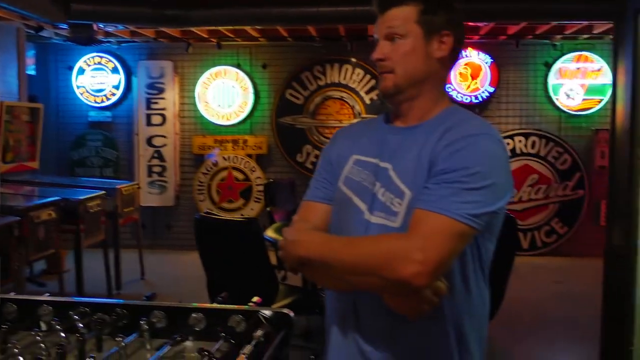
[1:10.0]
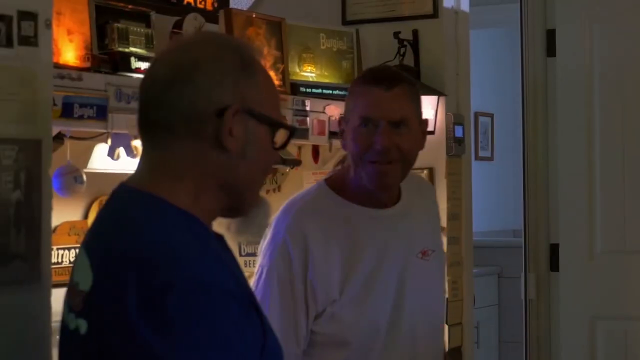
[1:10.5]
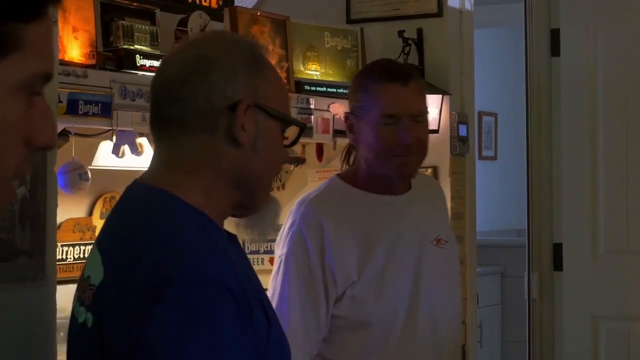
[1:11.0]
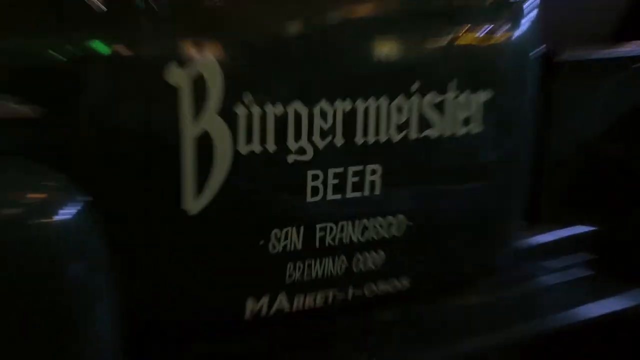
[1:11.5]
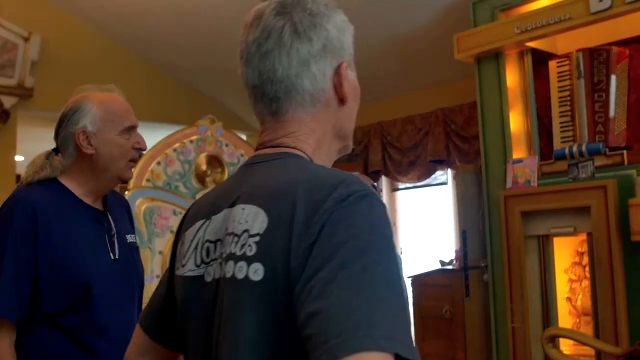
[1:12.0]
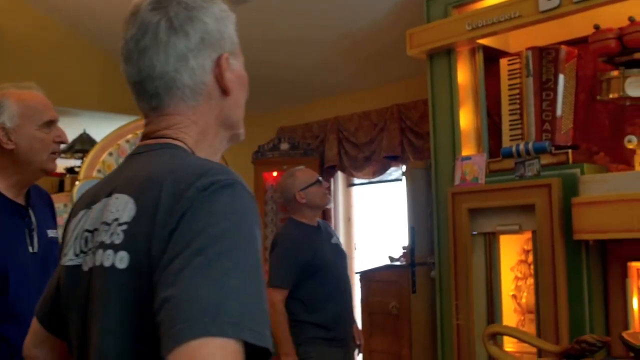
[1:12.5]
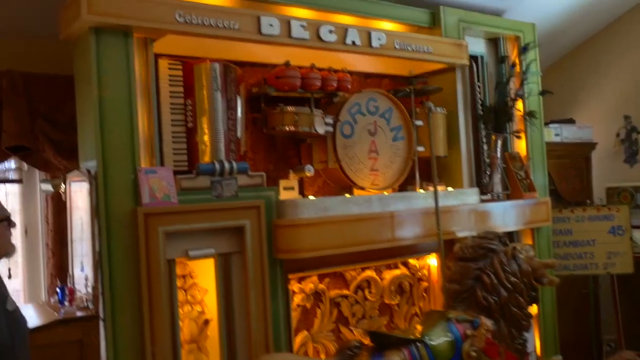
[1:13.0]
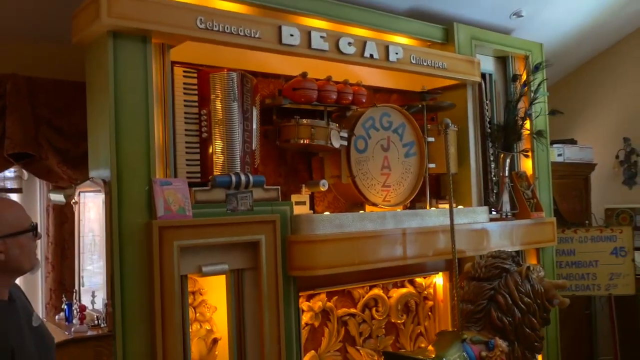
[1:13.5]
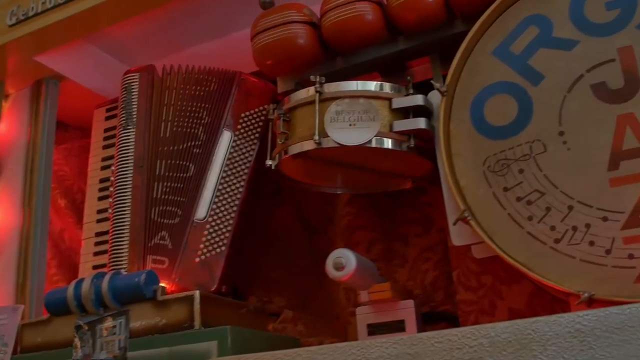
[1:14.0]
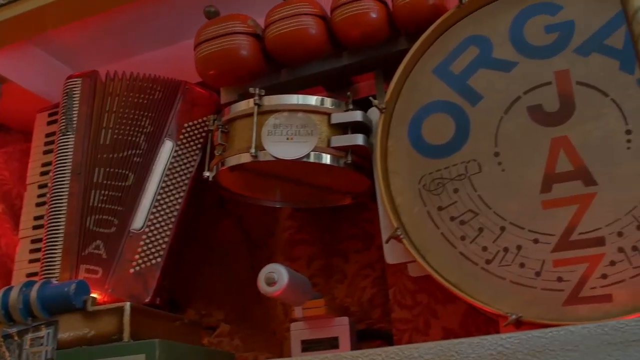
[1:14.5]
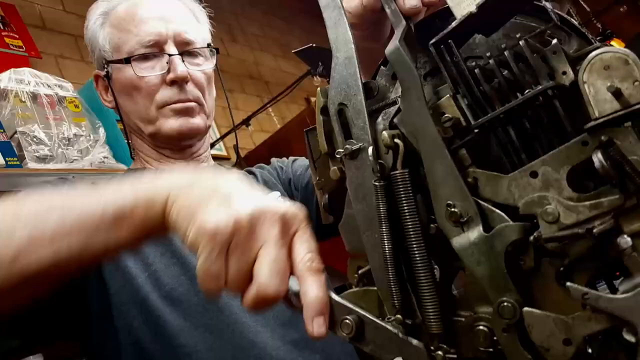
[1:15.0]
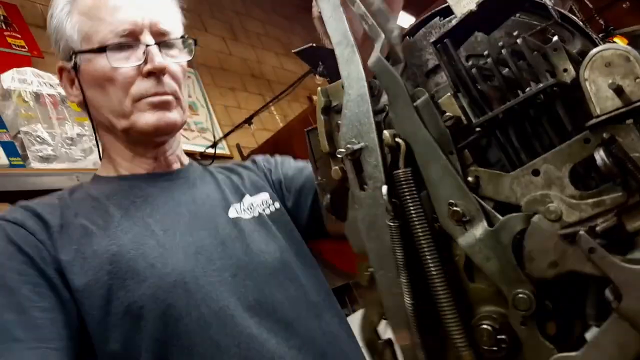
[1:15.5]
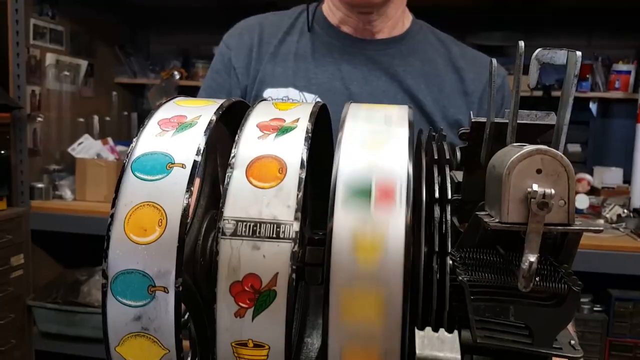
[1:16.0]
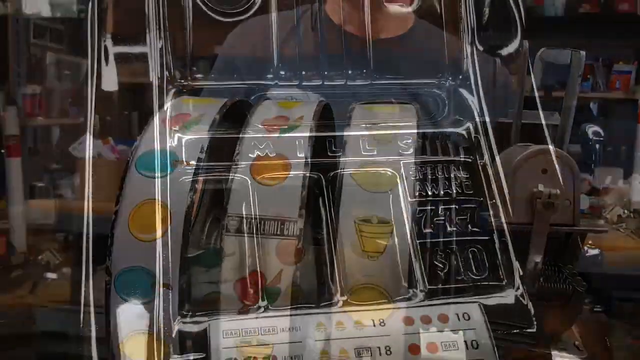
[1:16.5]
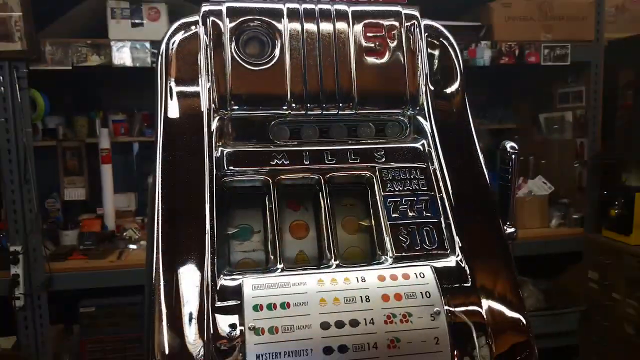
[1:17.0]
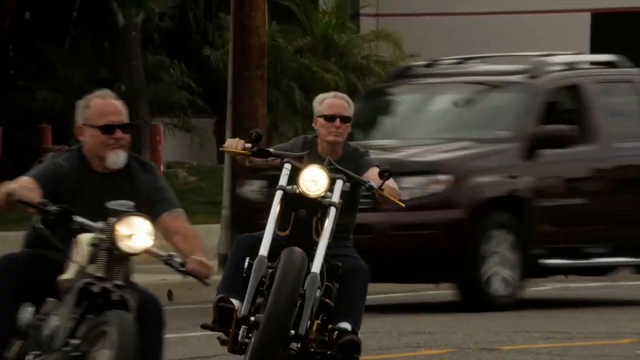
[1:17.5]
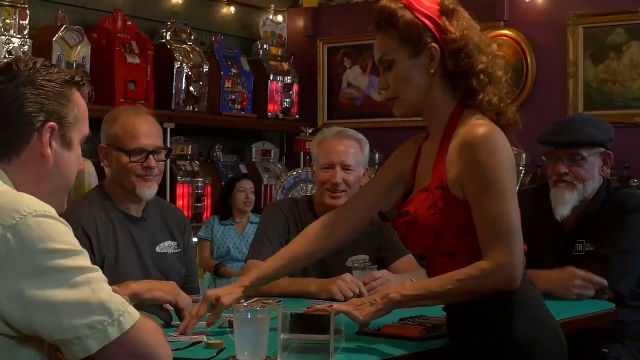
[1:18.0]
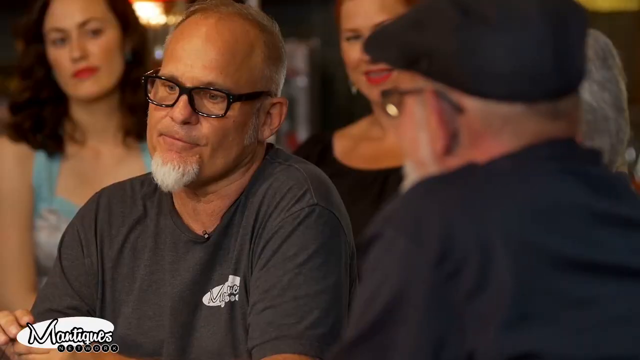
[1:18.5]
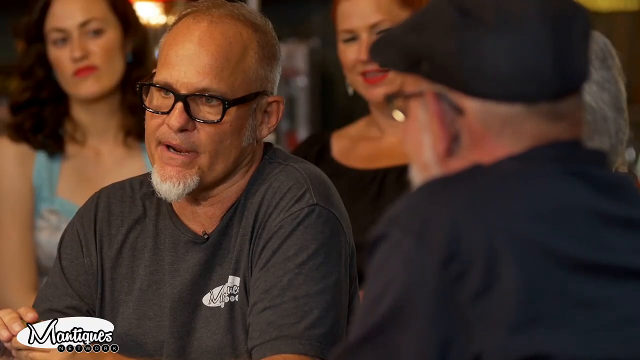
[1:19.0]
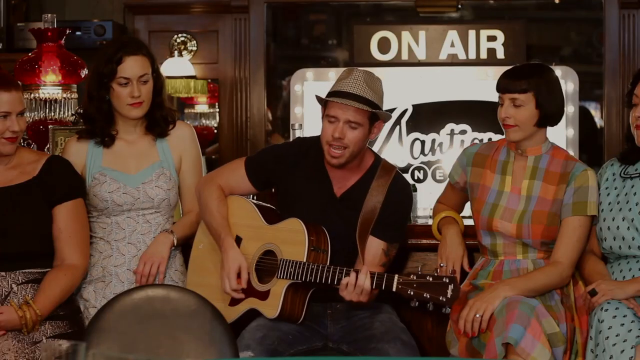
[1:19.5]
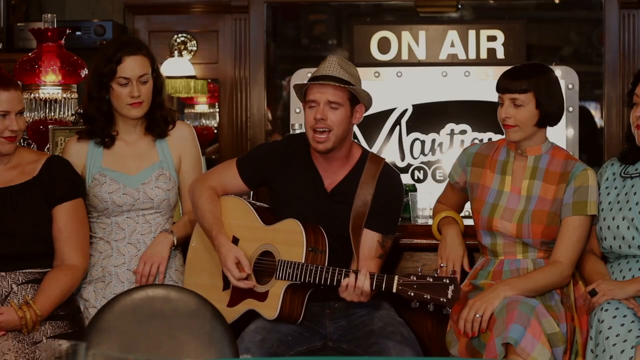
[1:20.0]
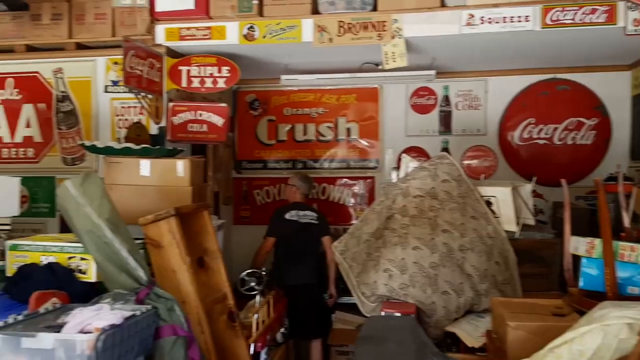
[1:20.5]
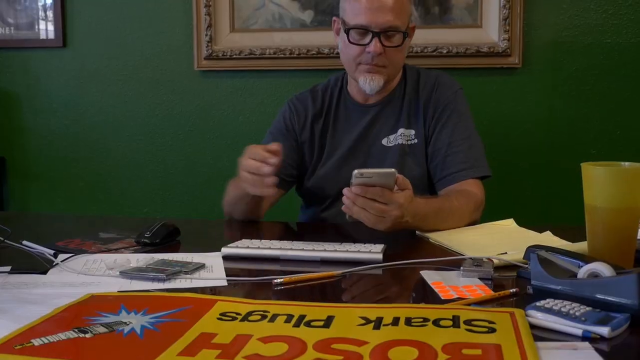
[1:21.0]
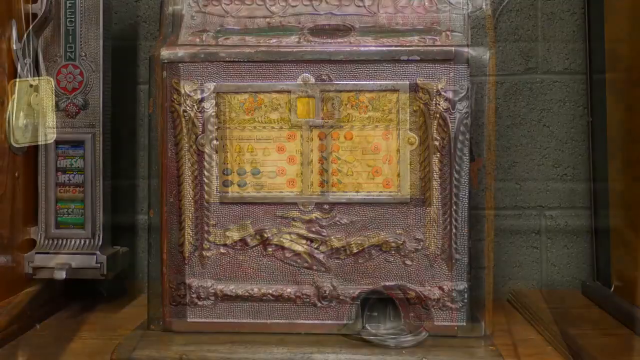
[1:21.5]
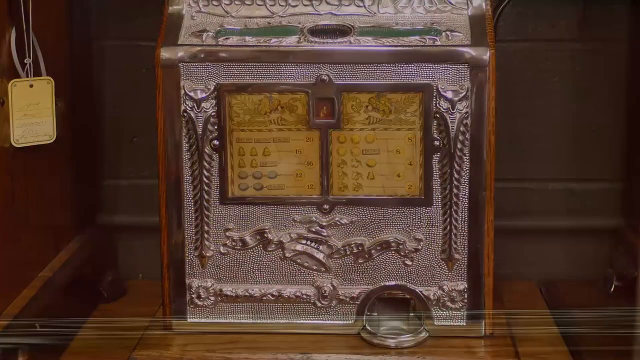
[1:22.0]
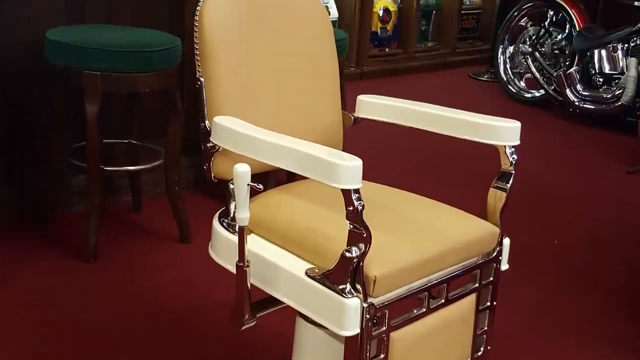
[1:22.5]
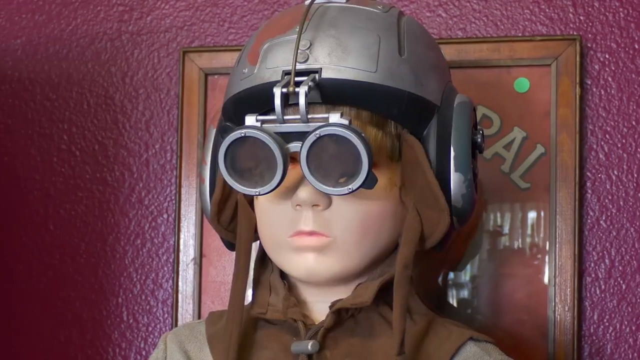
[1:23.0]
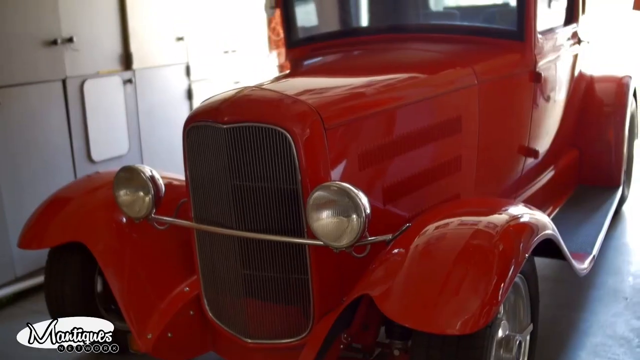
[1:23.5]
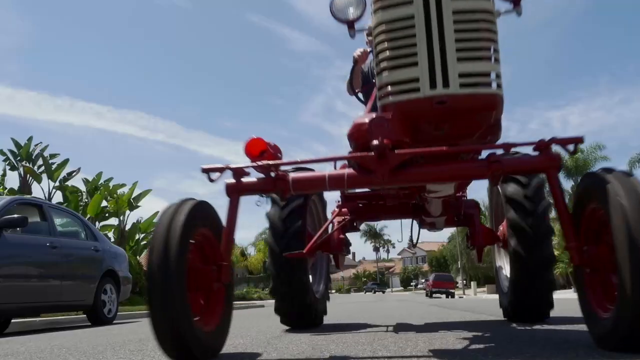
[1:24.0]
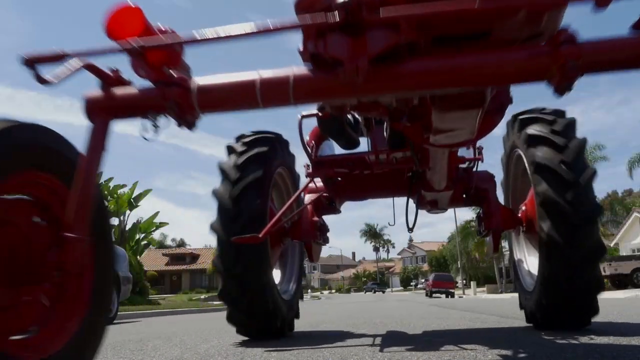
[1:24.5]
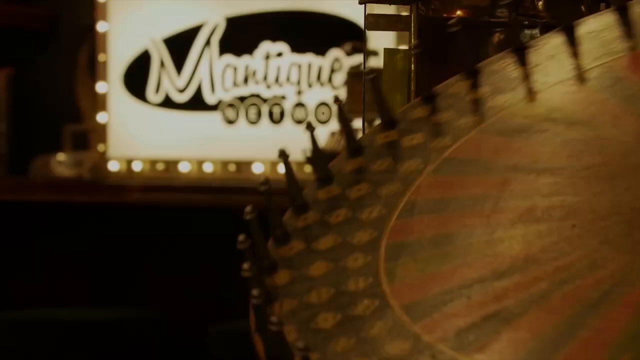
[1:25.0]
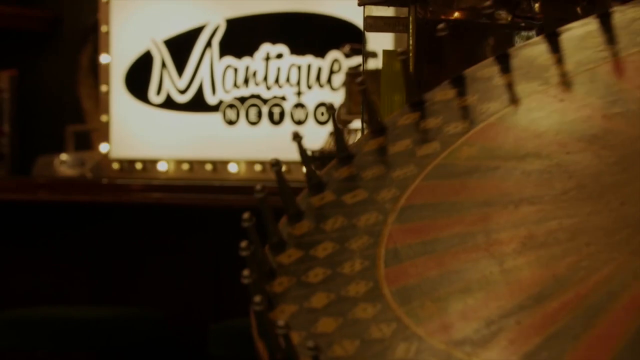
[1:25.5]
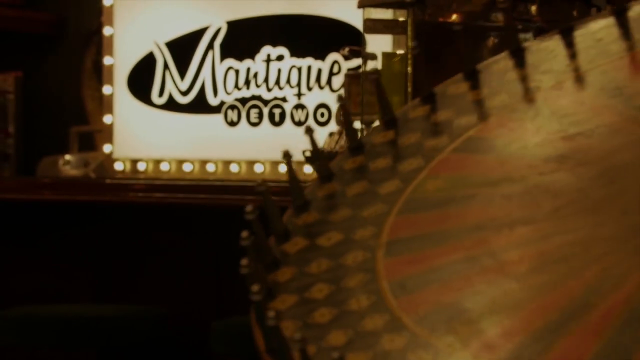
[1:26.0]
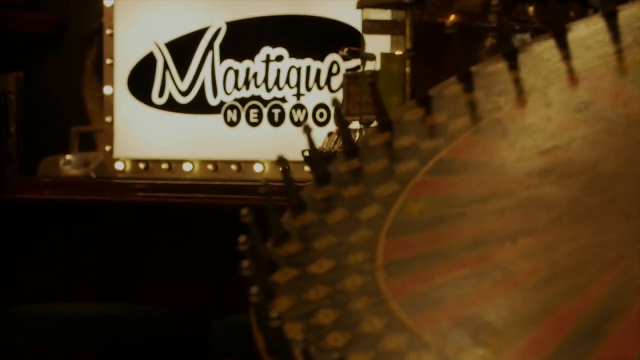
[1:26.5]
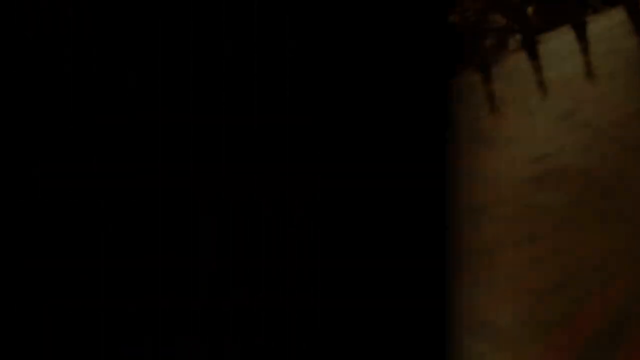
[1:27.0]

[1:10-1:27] Gentlemen talk, with all kinds of old-timey machines in the background and signage reading "used cars" and "oldsmobile". The video moves to an old vintage truck with text that reads something along the lines of Burgermeister Beer. Someone plays guitar, and there are old-timey slot machines, another vintage car and a vintage roulette table among many vintage items. The name "Mantique Network" is shown again, apparently the seller of these items. Another shot shows men on motorcycles, and other shots show old-timey barber shop chairs and old-timey aviator gear. The video could potentially be an advertisement for an antique shop.